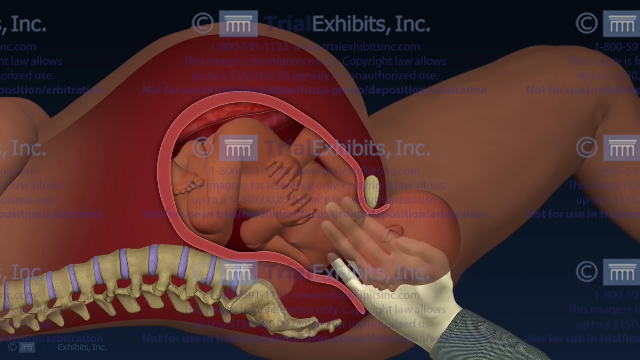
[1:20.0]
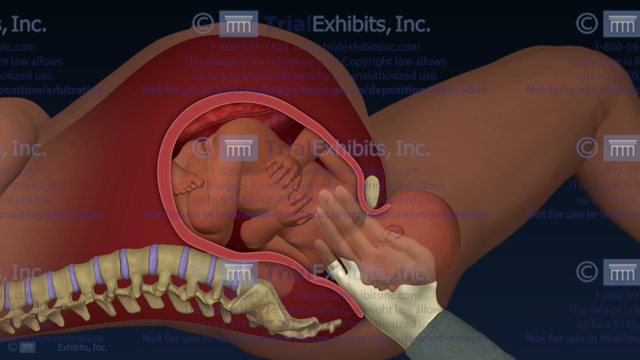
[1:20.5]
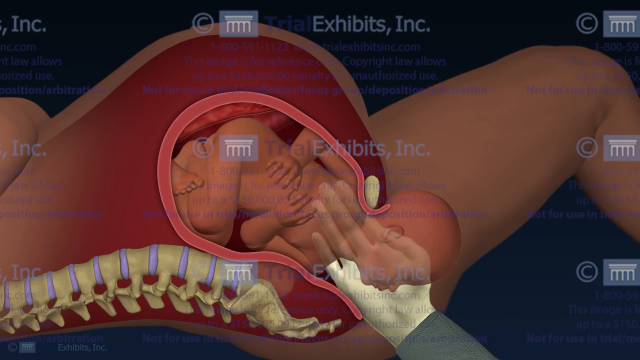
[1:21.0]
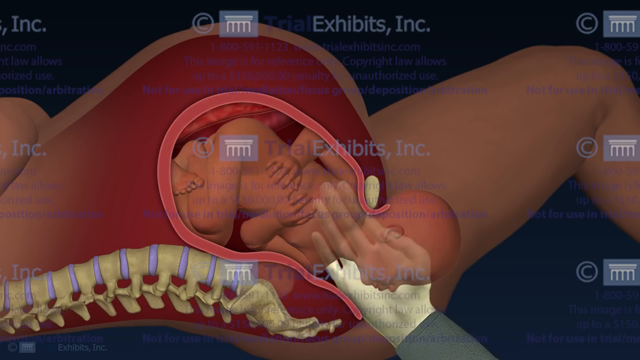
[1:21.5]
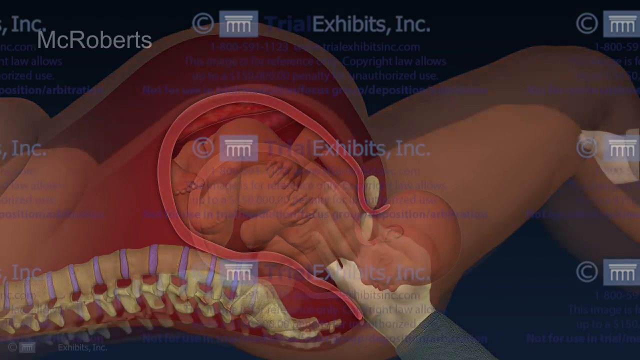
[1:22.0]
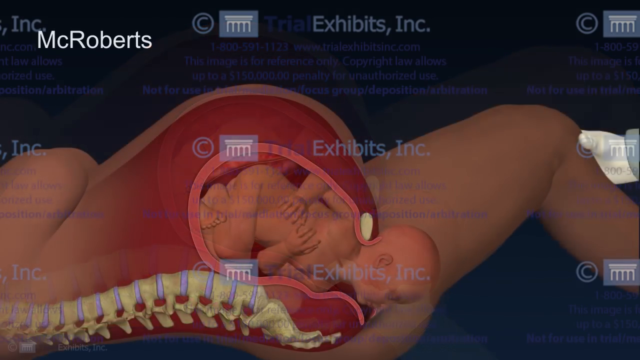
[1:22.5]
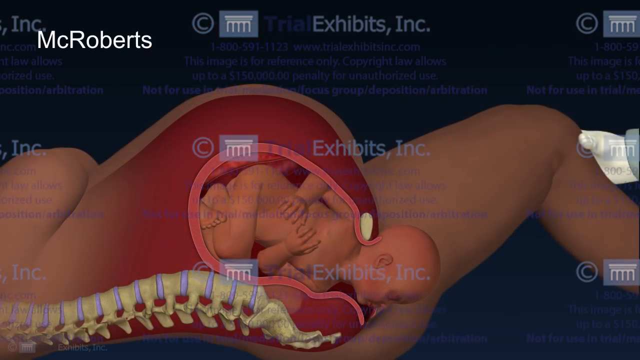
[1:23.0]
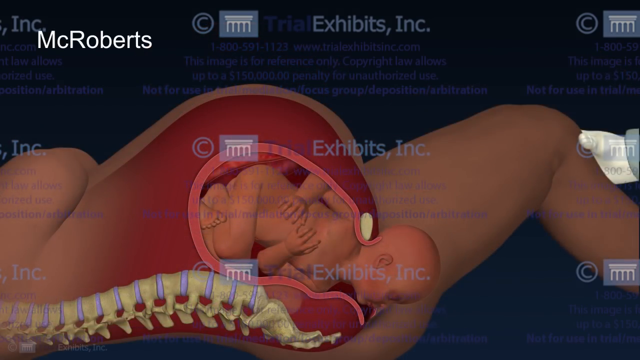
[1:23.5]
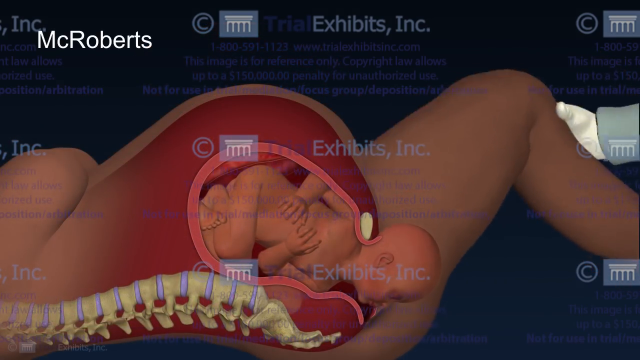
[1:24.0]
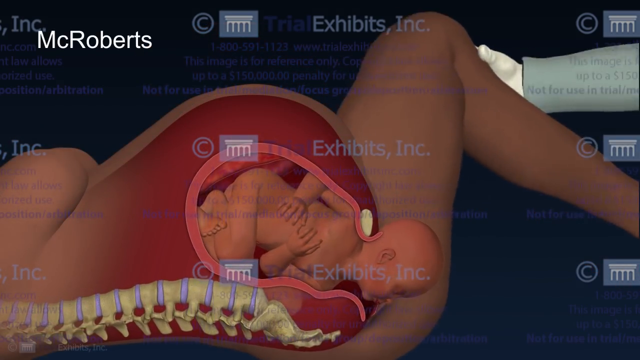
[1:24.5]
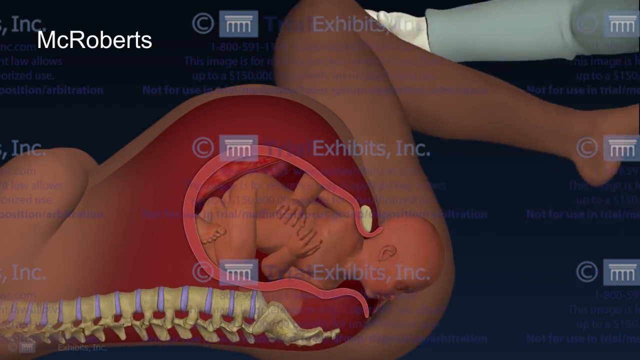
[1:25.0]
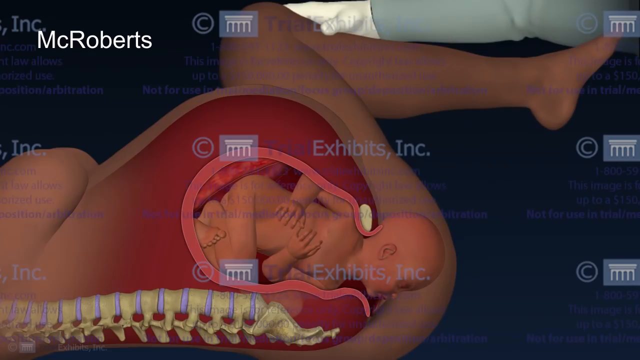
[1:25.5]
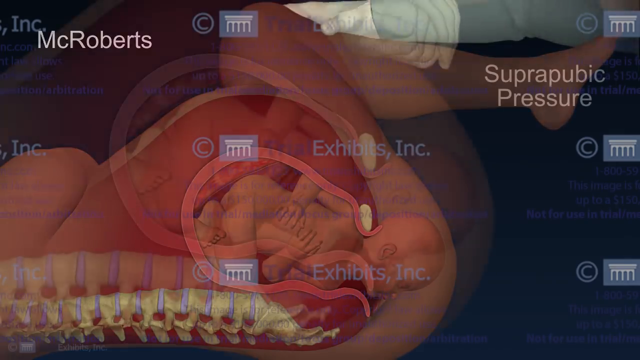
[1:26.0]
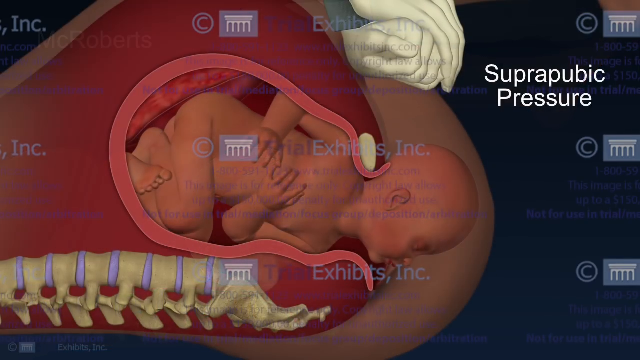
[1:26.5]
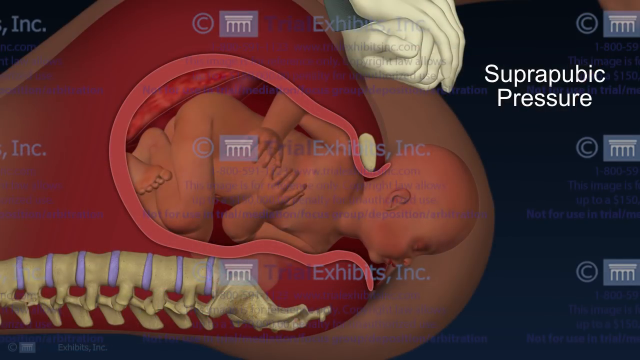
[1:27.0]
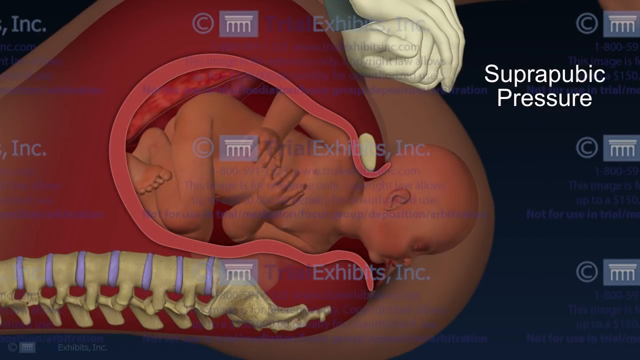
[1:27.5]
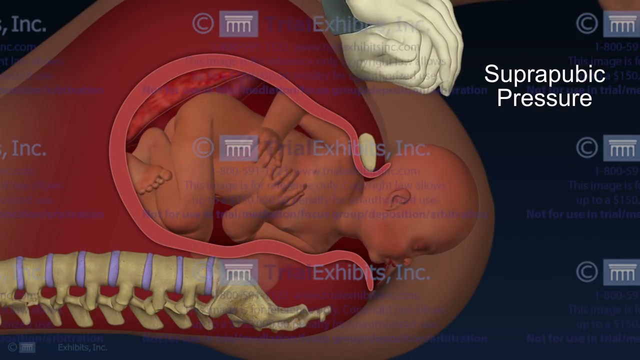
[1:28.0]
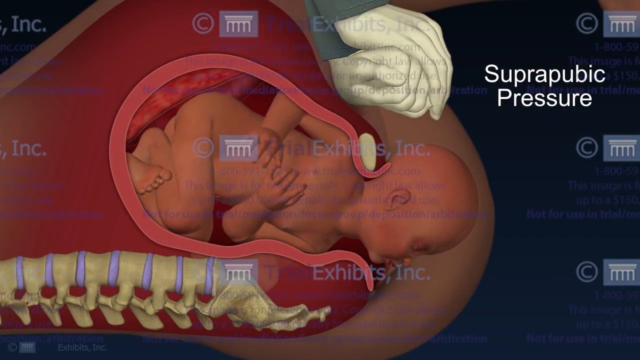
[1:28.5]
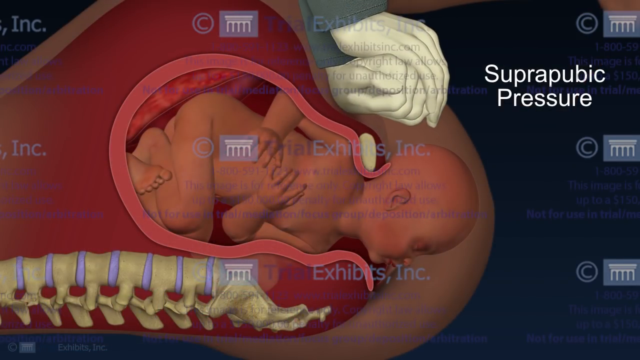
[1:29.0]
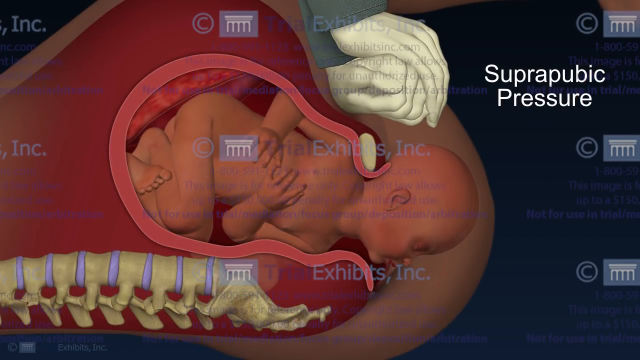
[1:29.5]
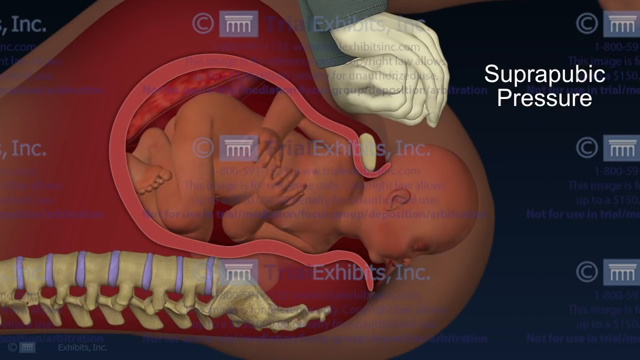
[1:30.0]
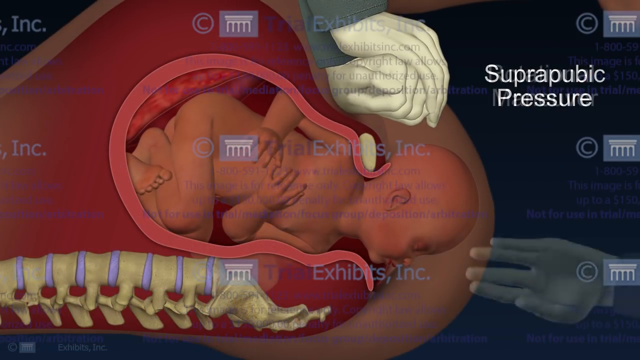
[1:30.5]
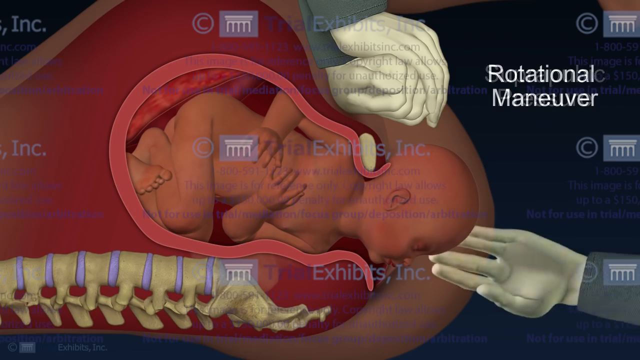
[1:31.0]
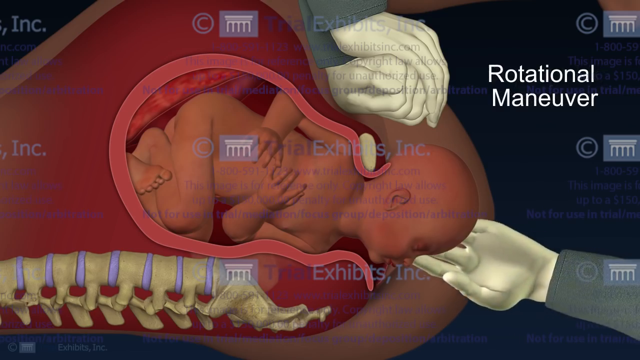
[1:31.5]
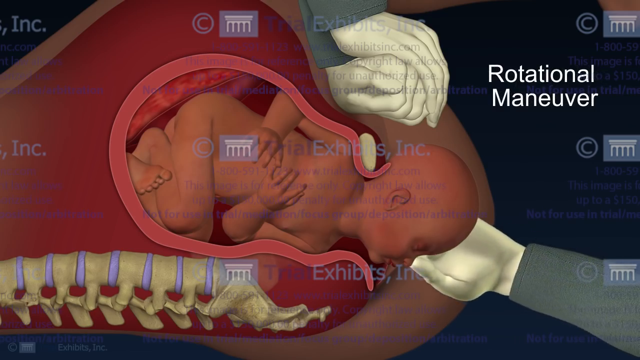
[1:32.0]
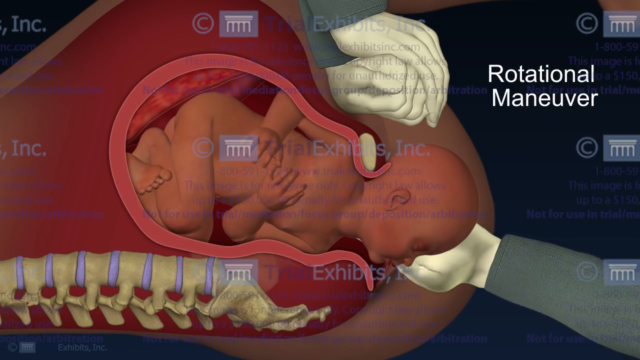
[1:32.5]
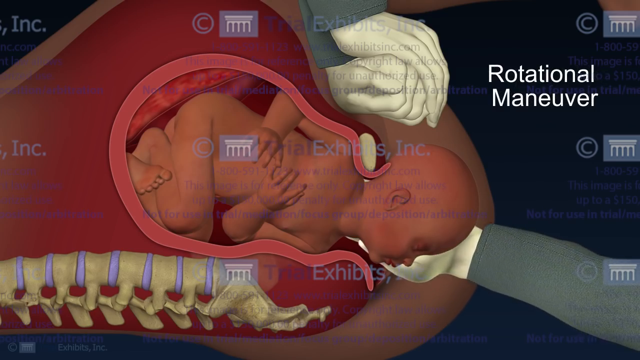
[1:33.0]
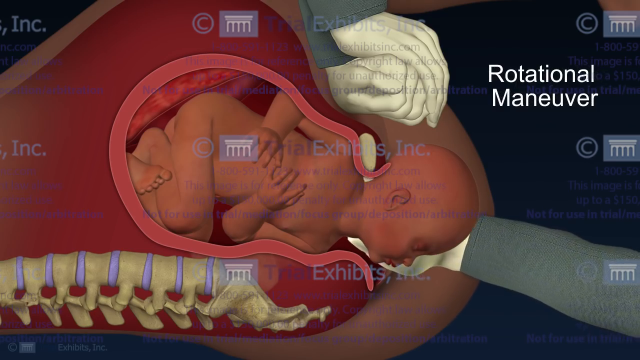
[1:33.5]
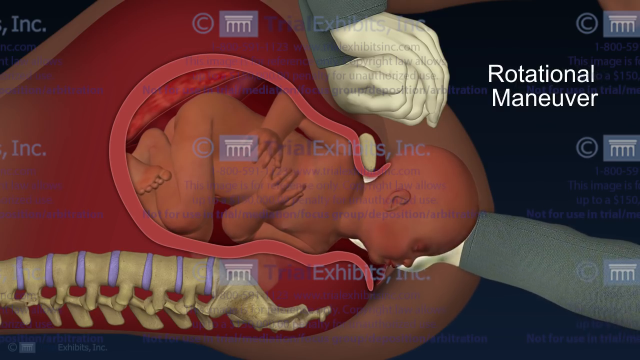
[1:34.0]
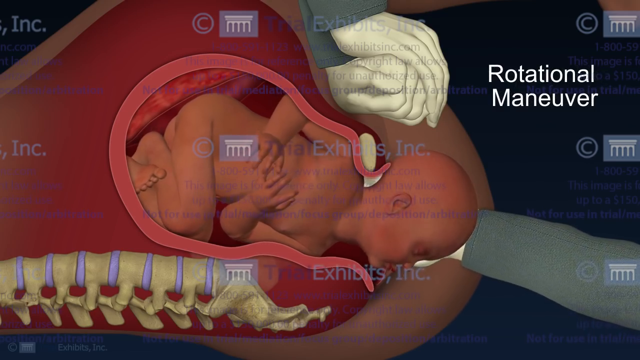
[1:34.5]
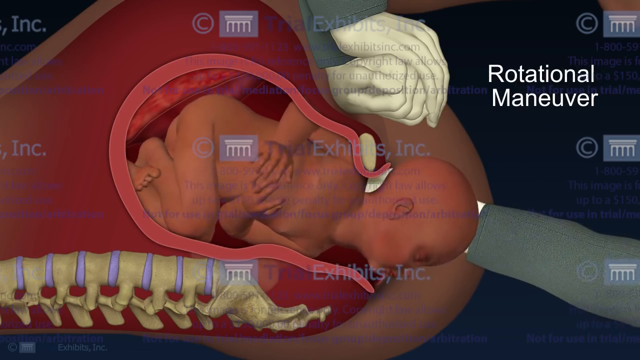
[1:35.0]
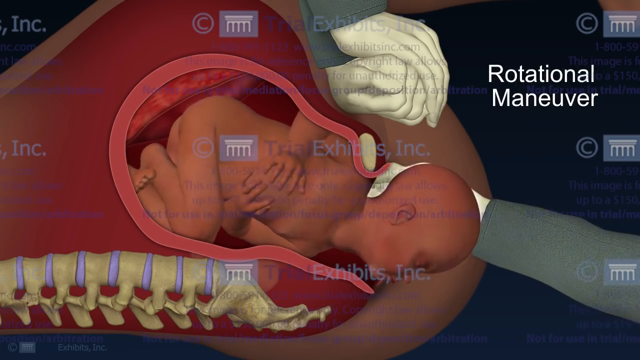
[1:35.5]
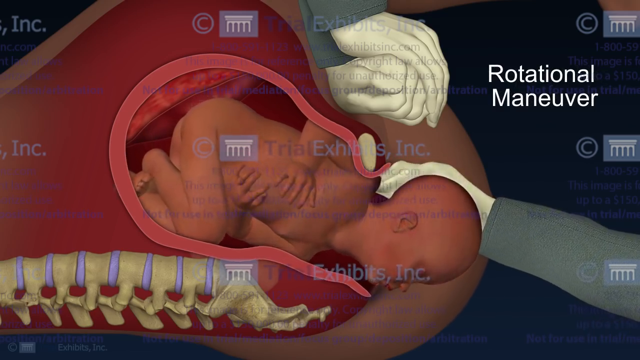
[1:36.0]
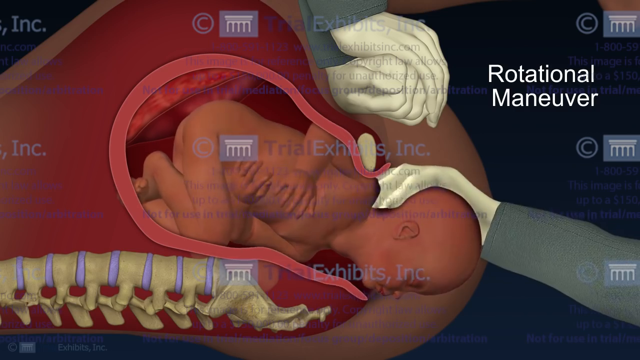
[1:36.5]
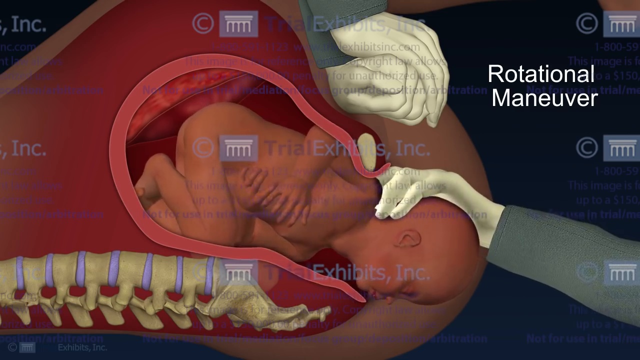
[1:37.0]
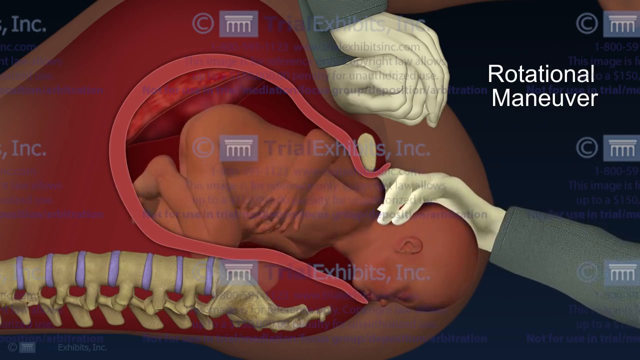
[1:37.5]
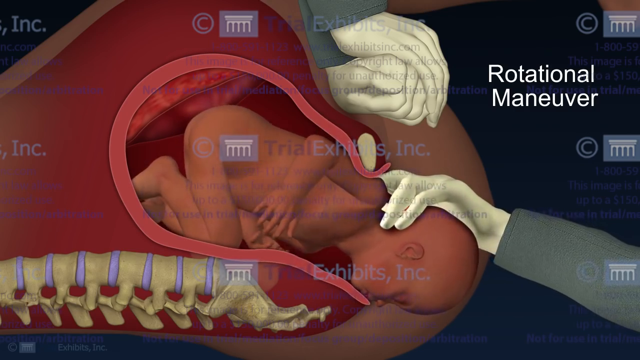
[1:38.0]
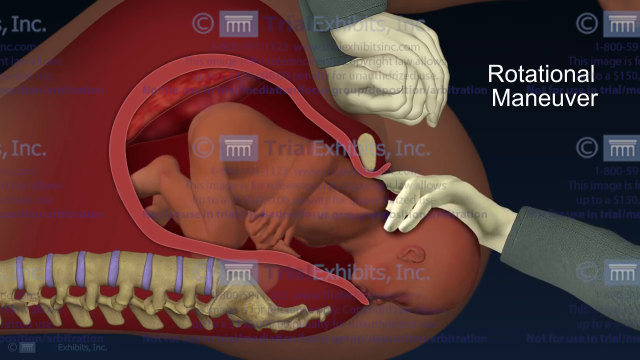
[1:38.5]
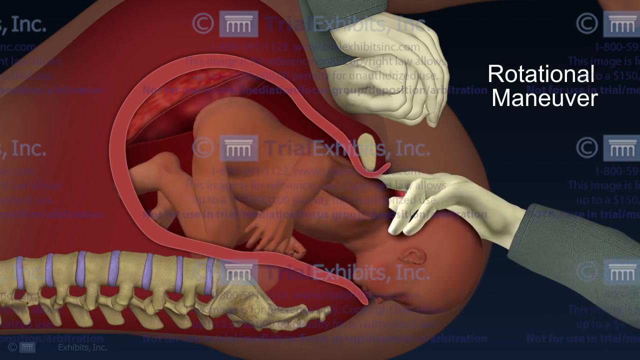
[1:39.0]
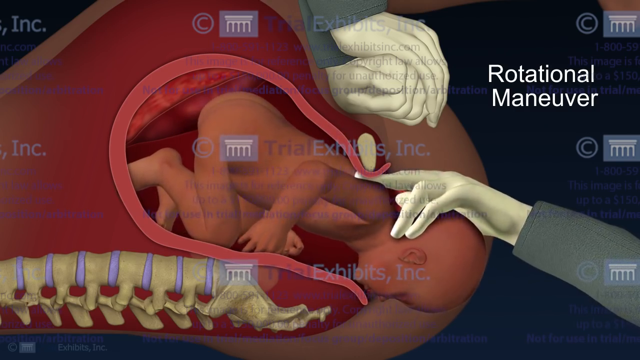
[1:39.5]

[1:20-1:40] The surgeon seems to be trying to move the hands further up, past the neck into the chest region. The animation then switches to a different part, zoomed out, showing the mother lying on her back. A man manually pushes her legs up, bringing her knees toward her belly, almost past it or in line with the belly button, which opens up the opening a little more for the baby. The man then has his hands clasped one over the other, apparently his left fist with his right hand kind of resting over it, below where her hamstrings are, with her legs up in the air; this is called suprapubic pressure. He pushes down on the bottom part of her belly. Apparently someone else helps guide the head: a second person's hand pulls the baby by the shoulders, pulling it down so that the twisted-up baby comes out straighter, and tries to rotate the baby.